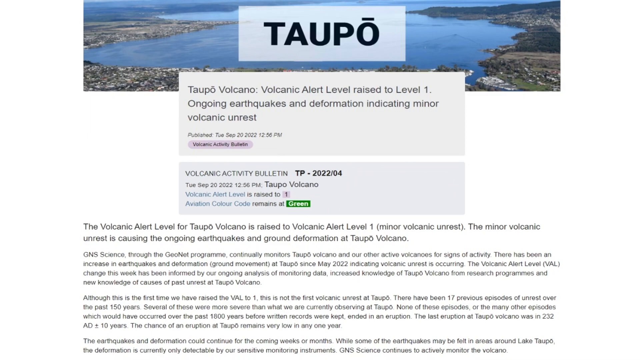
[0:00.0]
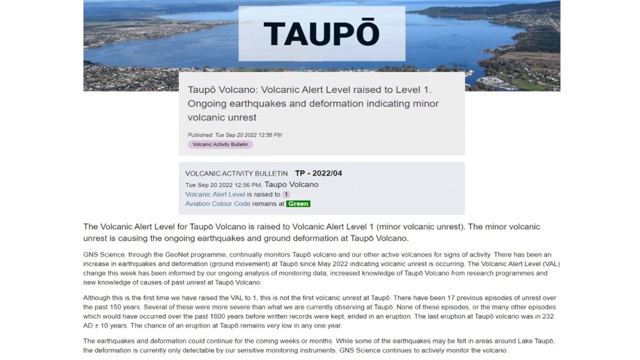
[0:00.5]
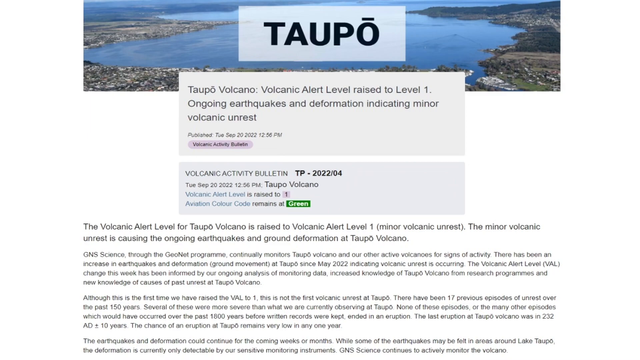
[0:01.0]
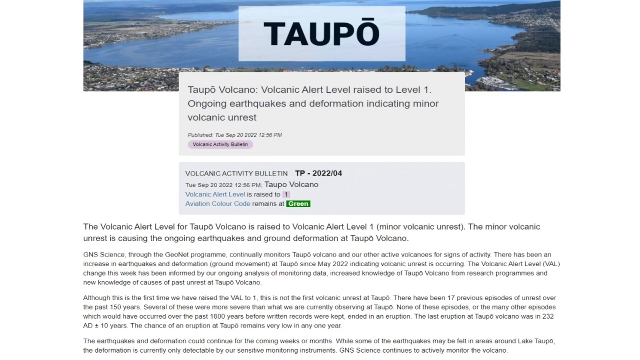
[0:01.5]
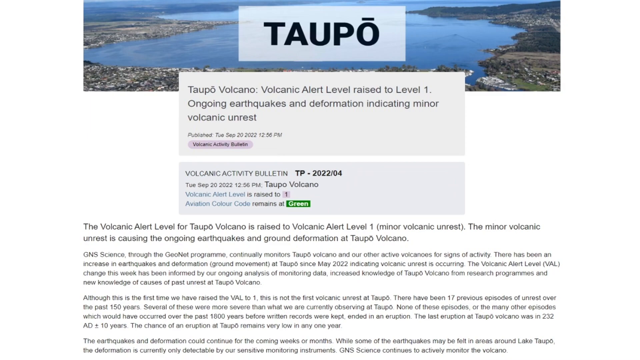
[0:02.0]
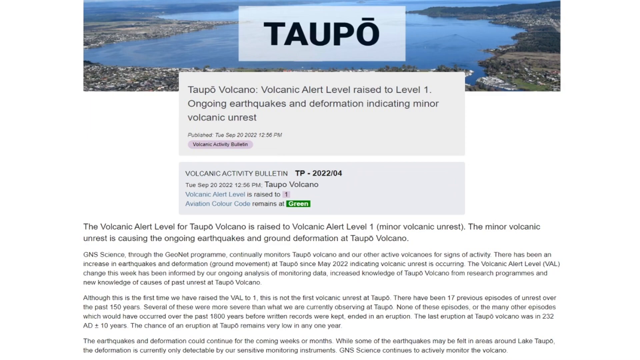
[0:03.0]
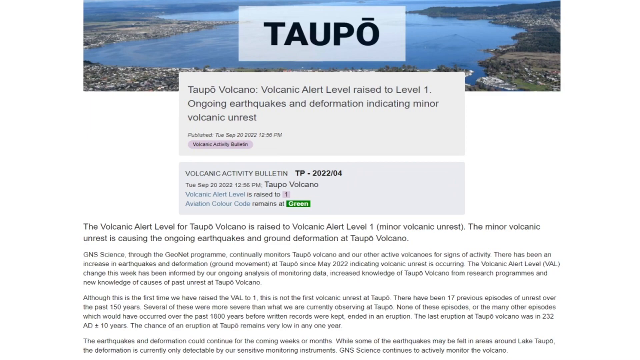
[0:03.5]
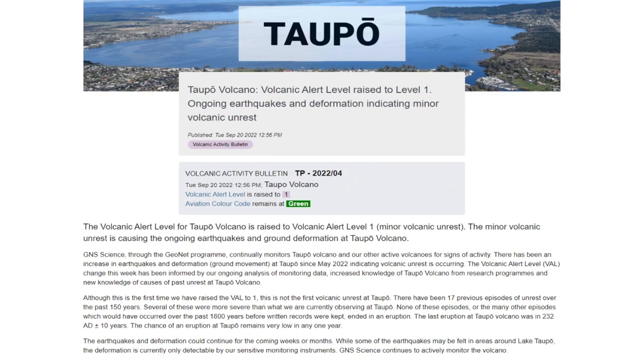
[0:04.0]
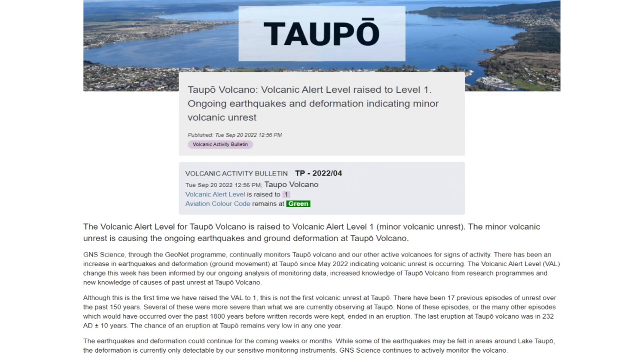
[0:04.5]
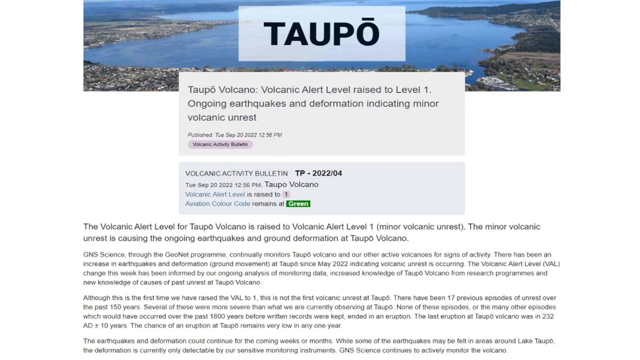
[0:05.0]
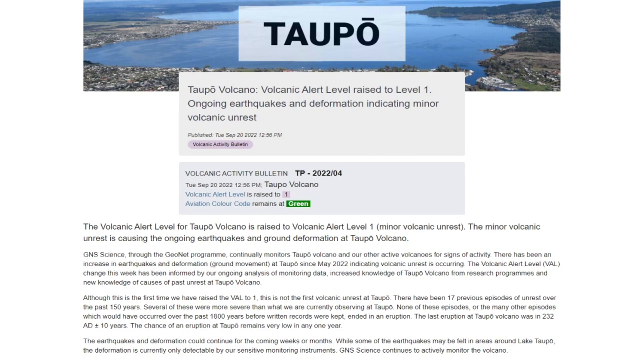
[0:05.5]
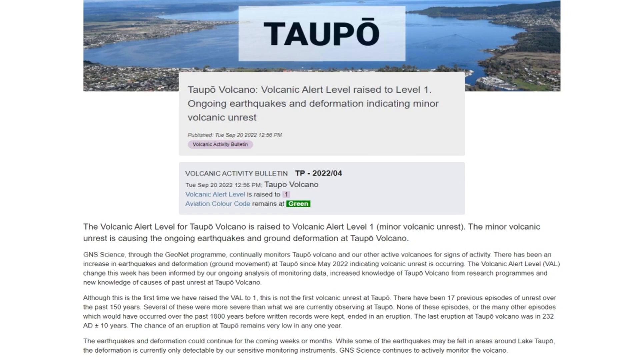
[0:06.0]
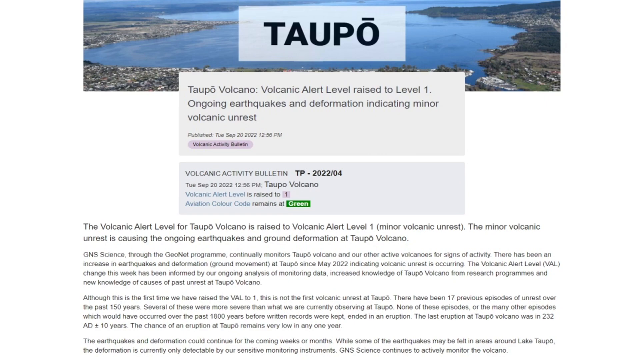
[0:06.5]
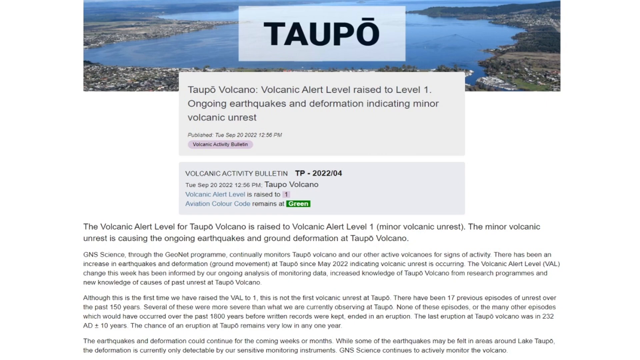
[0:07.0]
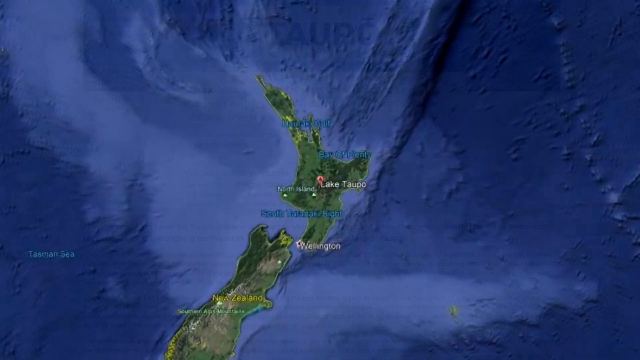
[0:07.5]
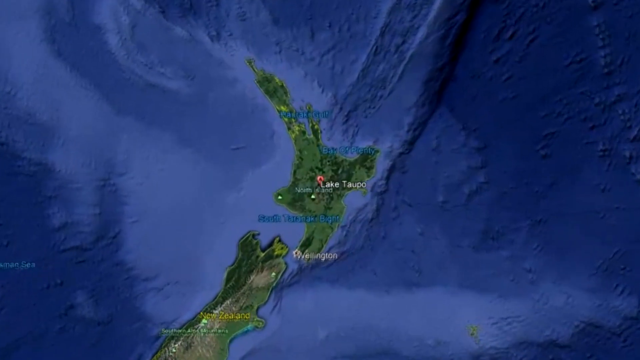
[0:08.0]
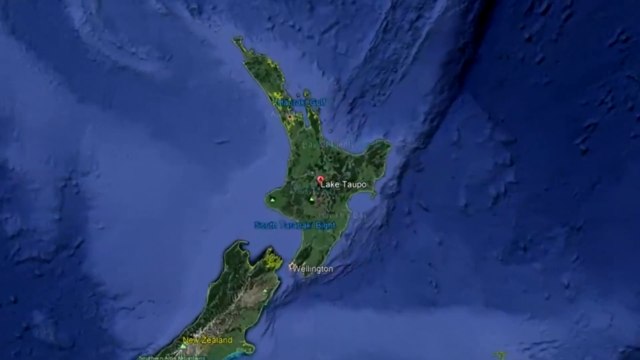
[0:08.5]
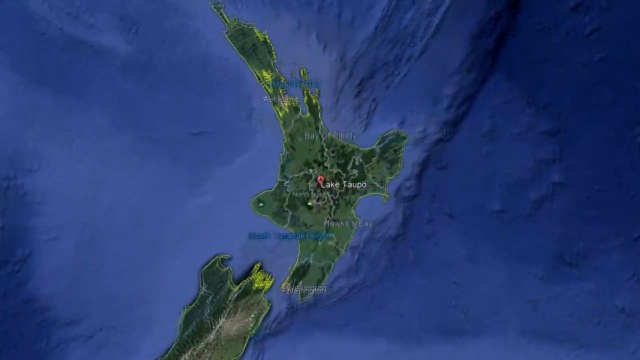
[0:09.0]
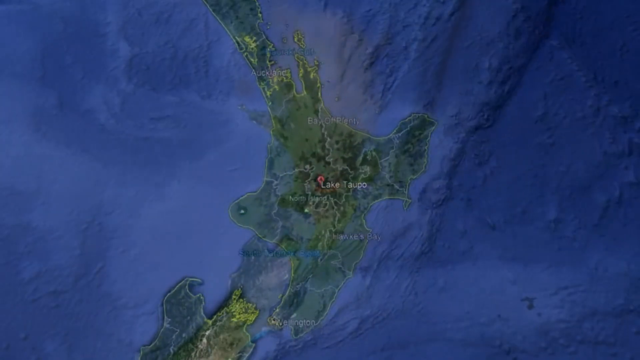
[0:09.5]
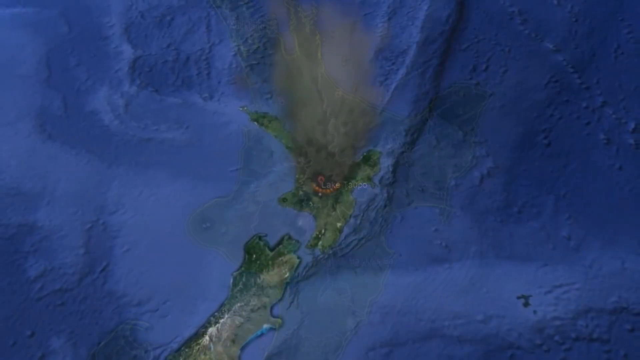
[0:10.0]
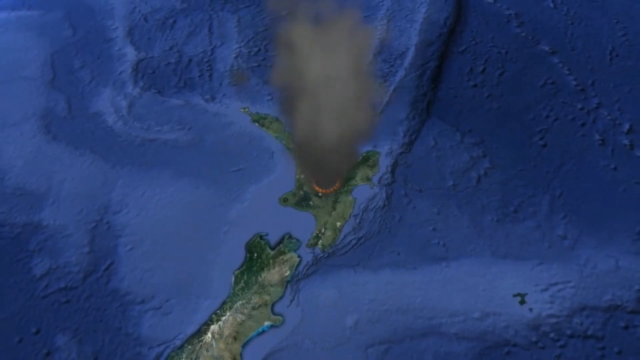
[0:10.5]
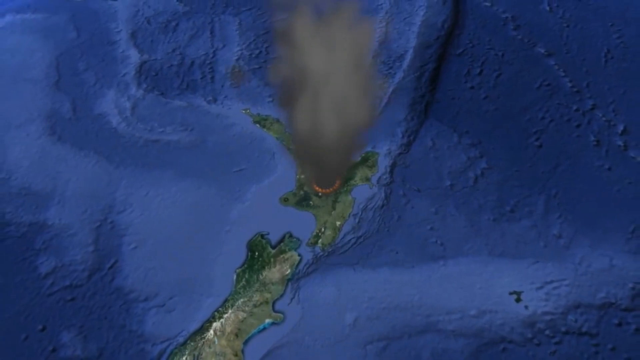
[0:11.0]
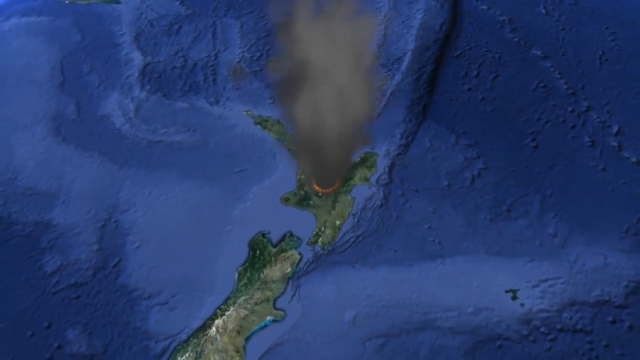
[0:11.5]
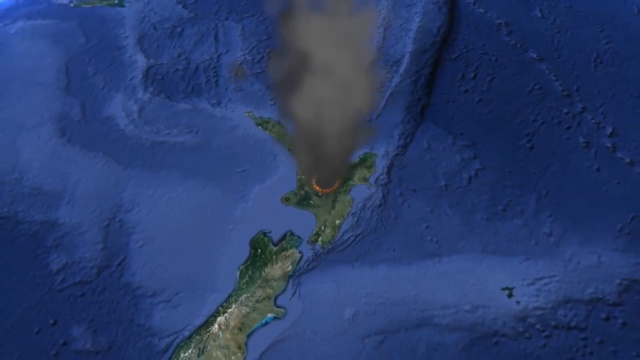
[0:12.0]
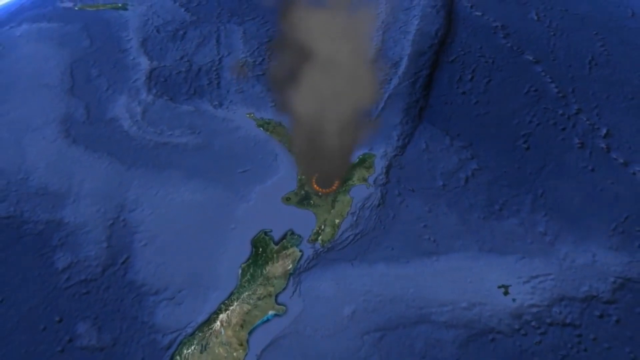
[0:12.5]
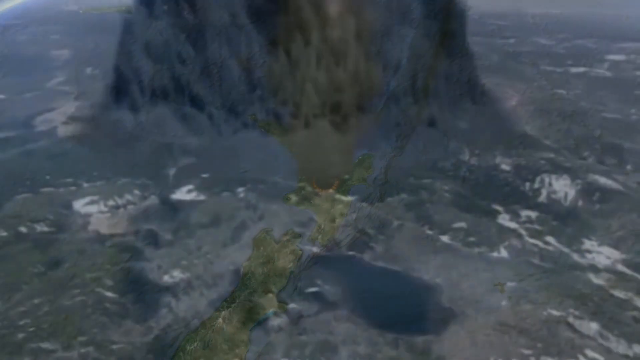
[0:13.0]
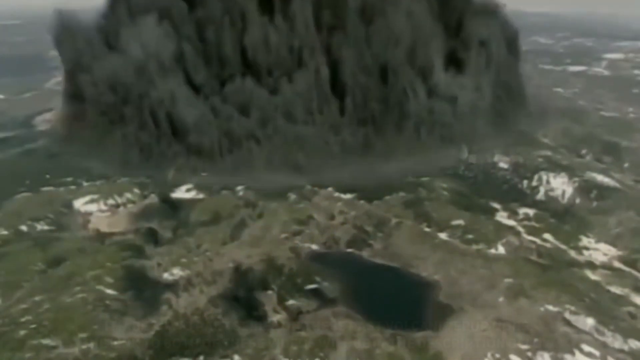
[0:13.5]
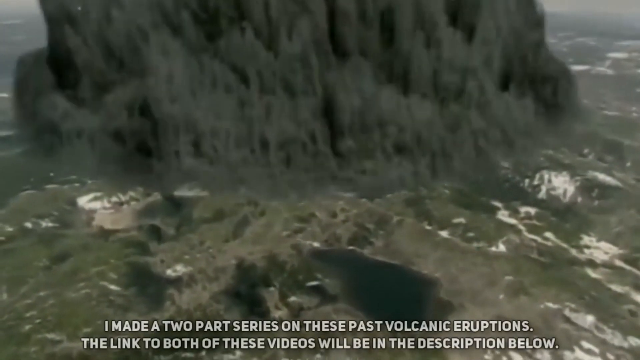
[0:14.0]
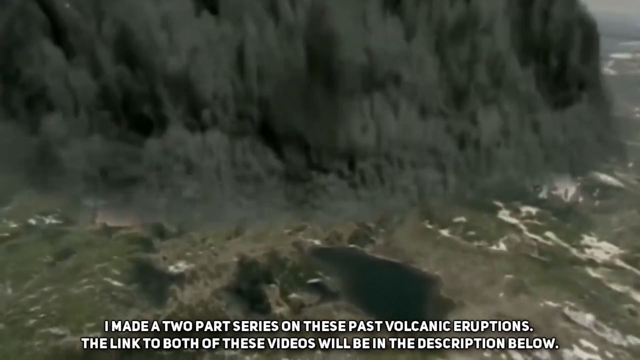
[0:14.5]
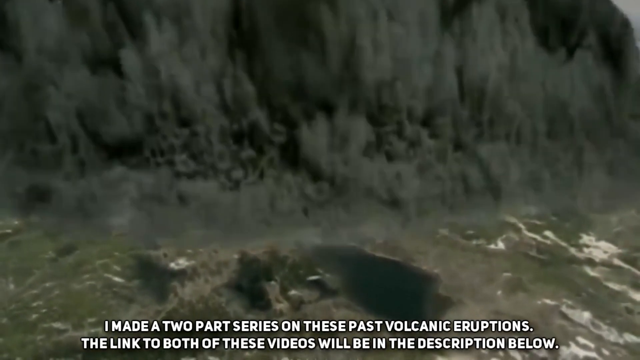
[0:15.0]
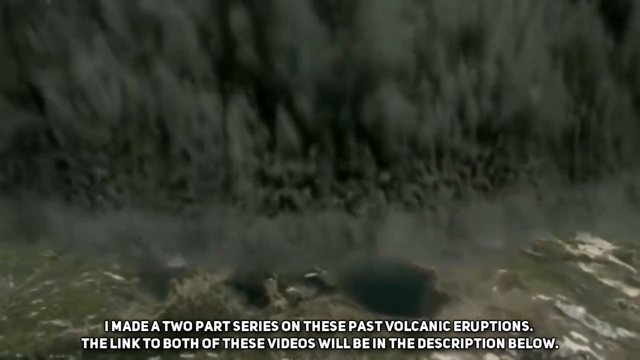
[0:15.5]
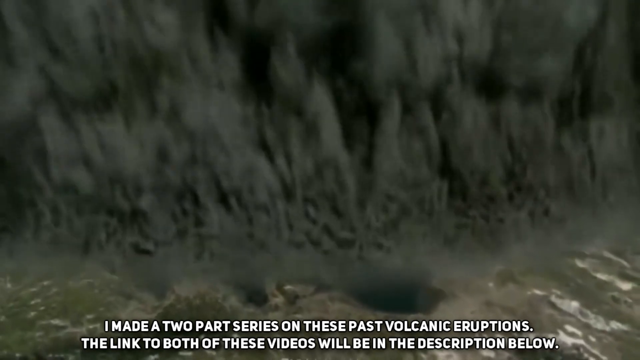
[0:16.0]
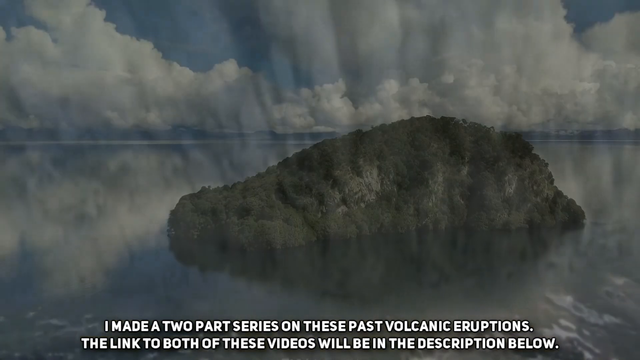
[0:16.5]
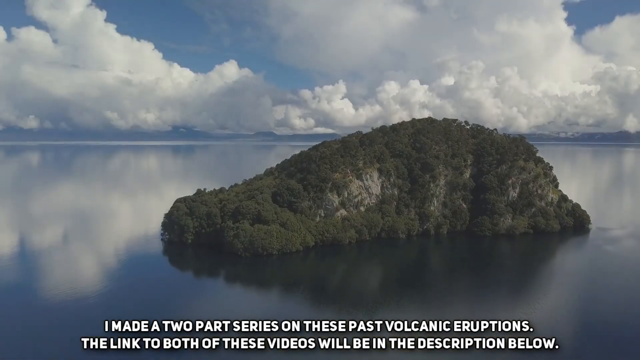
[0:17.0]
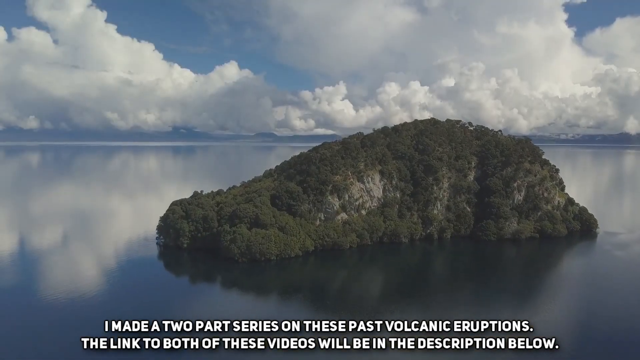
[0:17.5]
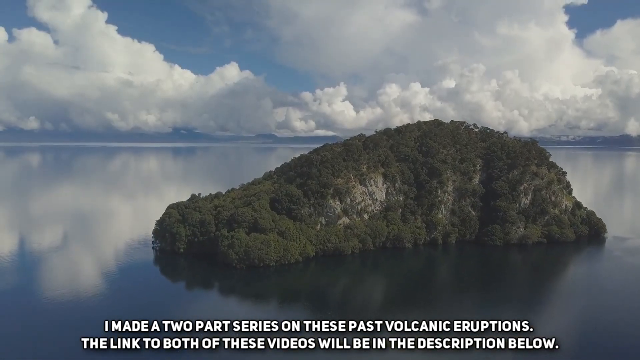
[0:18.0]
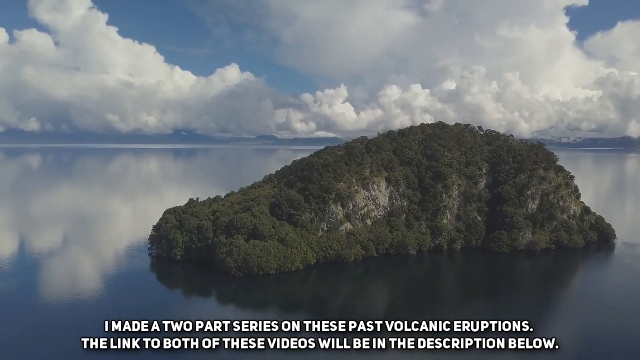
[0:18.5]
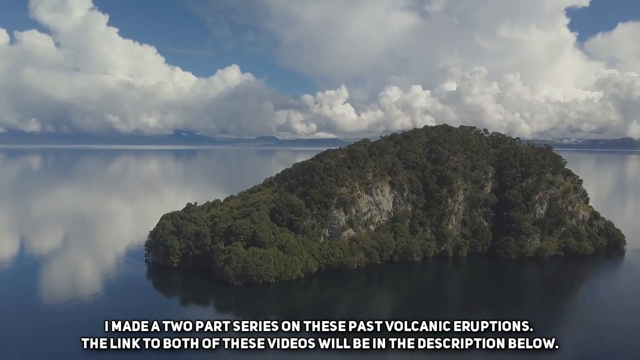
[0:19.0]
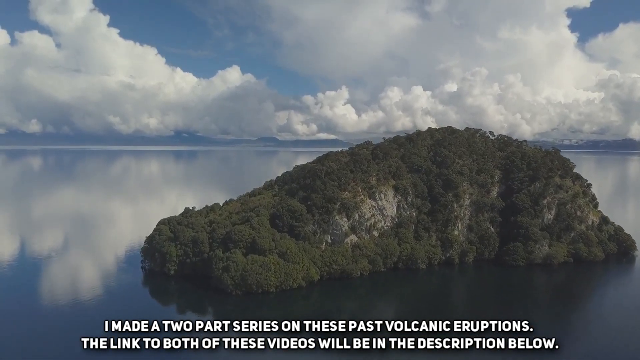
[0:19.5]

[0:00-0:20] The video opens on what appears to be a screenshot of a website, apparently titled Taupo, about a volcano. The header of the article reads "Taupo Volcano, volcanic alert level raised to level one, ongoing earthquakes and deformation indicating minor volcanic unrest." The article was published on Tuesday, September 20th, 2022, under a volcanic activity bulletin. The rest of the article reads "the volcanic alert level for Taupo Volcano is raised to volcanic alert level one. The minor volcanic unrest is causing the ongoing earthquakes and ground deformation at Taupo Volcano." It continues: "There's been an increase in earthquakes and deformation at Taupo since May 2022, indicating volcanic unrest is occurring. The volcanic alert level change this week has been informed by our ongoing analysis of monitoring data, increased knowledge of Taupo Volcano from research programs and new knowledge of causes of past unrest at Taupo Volcano."